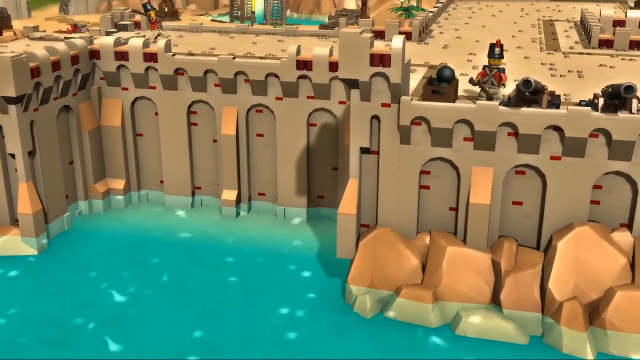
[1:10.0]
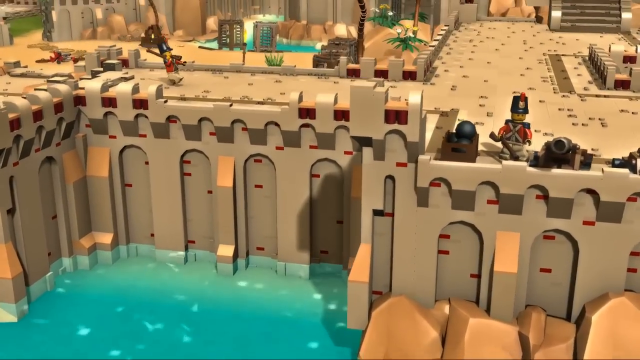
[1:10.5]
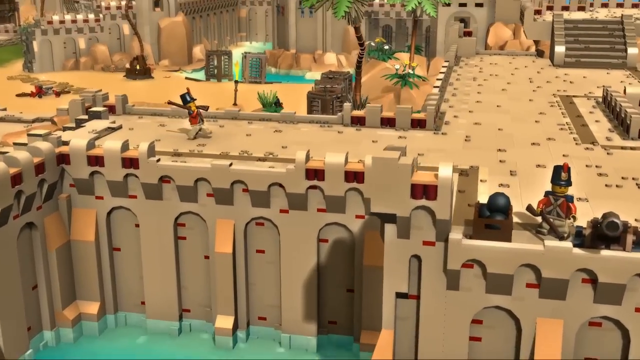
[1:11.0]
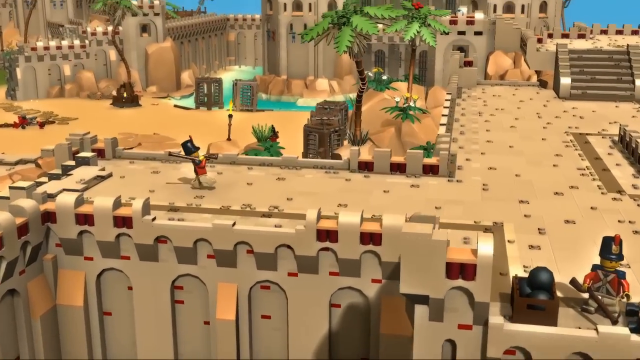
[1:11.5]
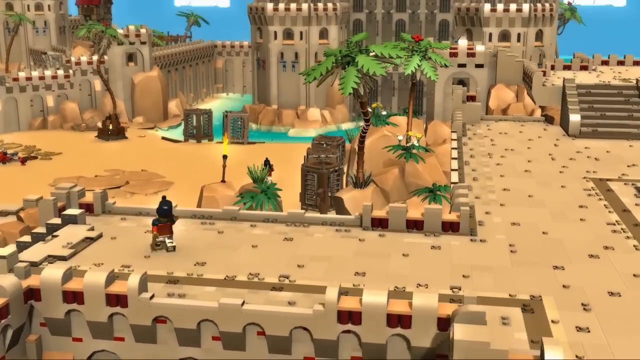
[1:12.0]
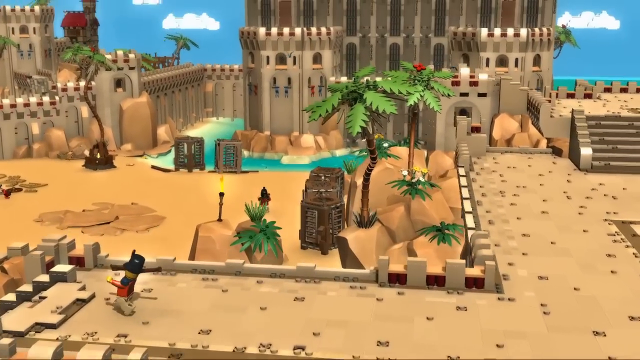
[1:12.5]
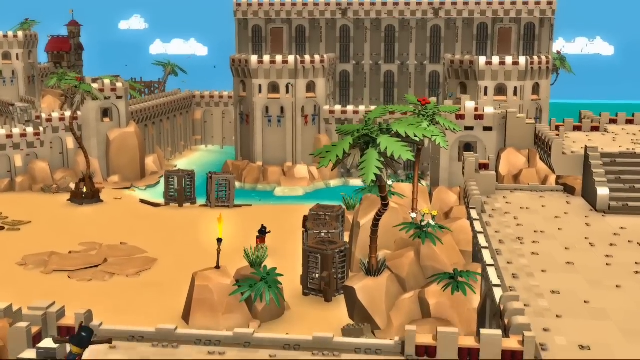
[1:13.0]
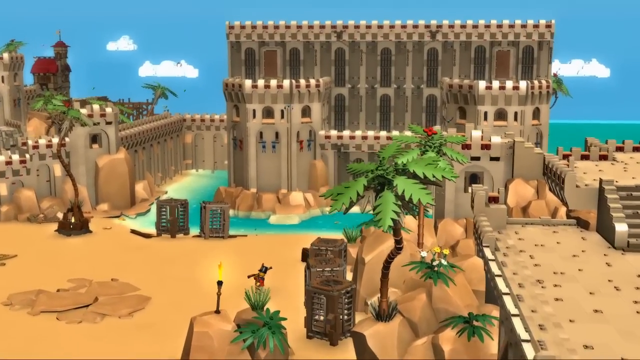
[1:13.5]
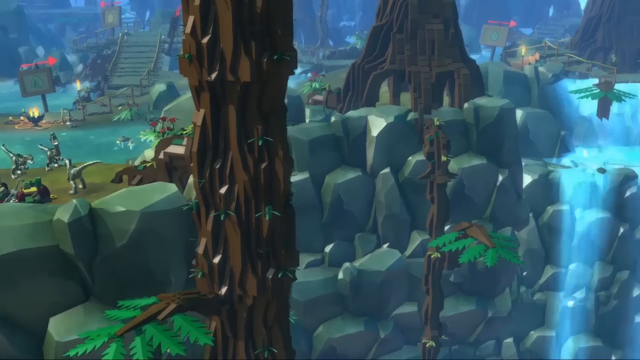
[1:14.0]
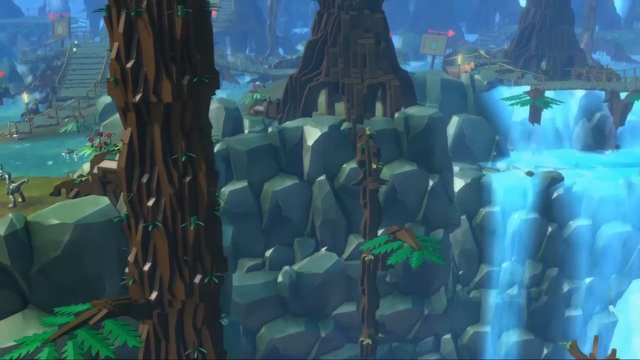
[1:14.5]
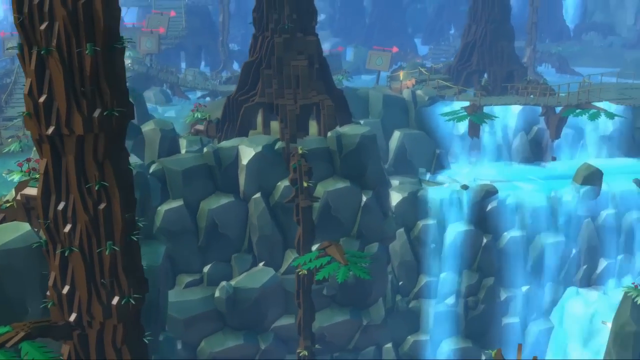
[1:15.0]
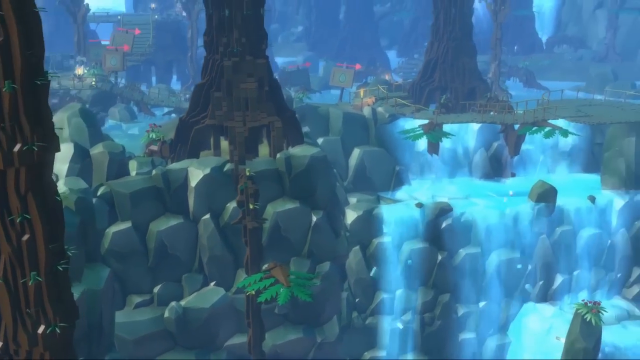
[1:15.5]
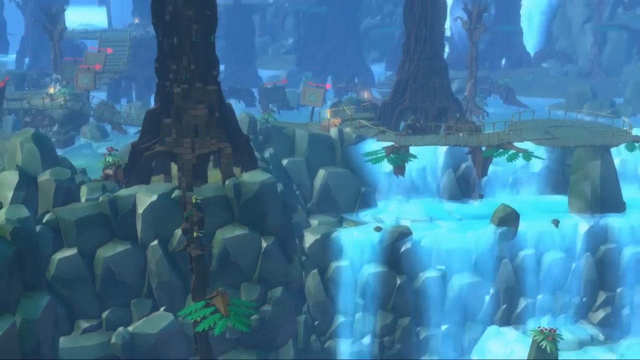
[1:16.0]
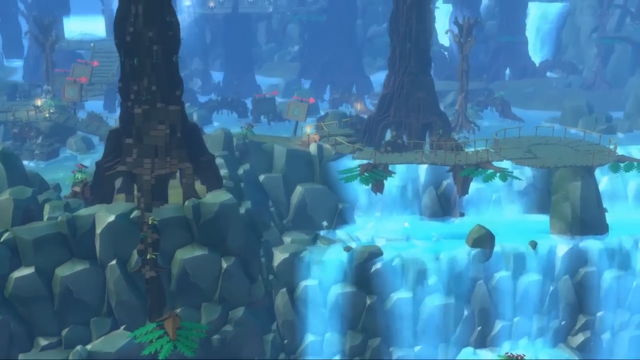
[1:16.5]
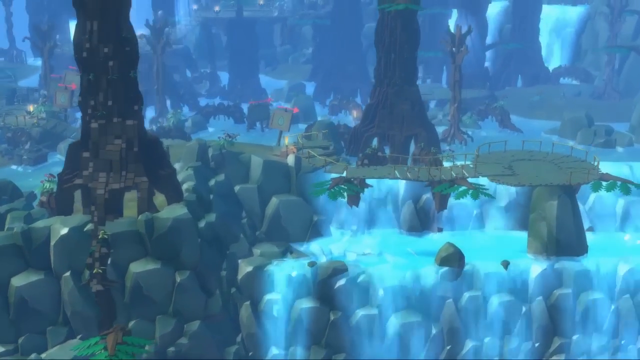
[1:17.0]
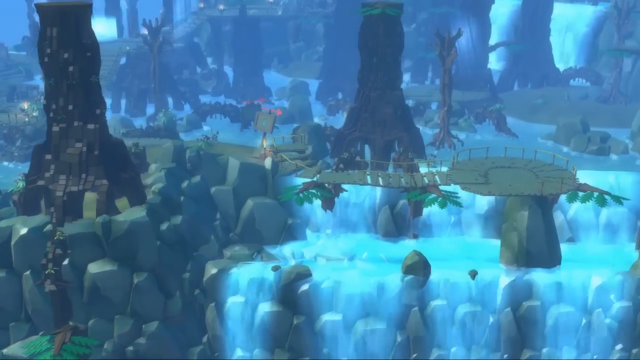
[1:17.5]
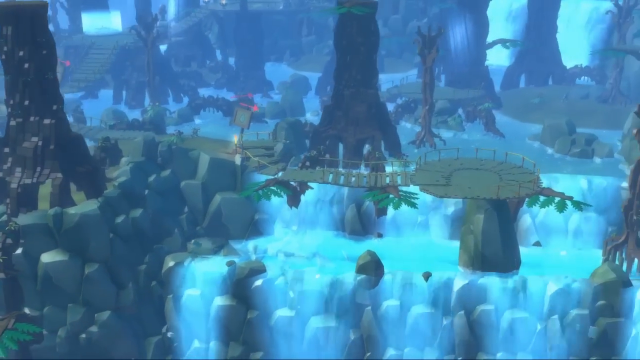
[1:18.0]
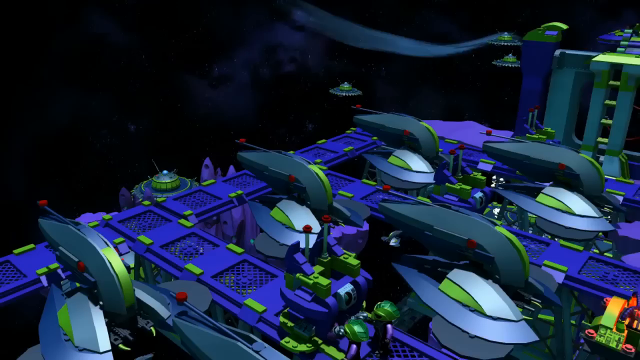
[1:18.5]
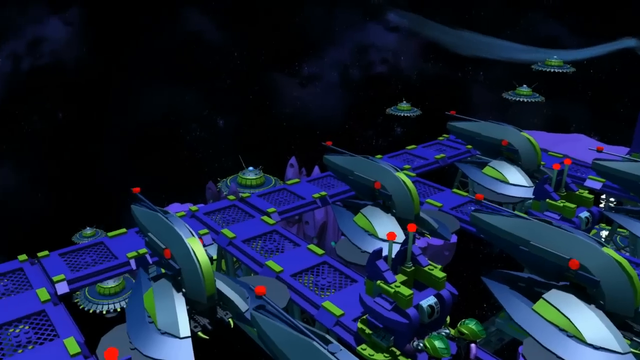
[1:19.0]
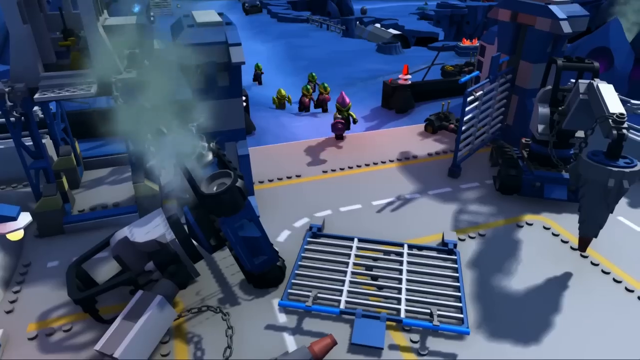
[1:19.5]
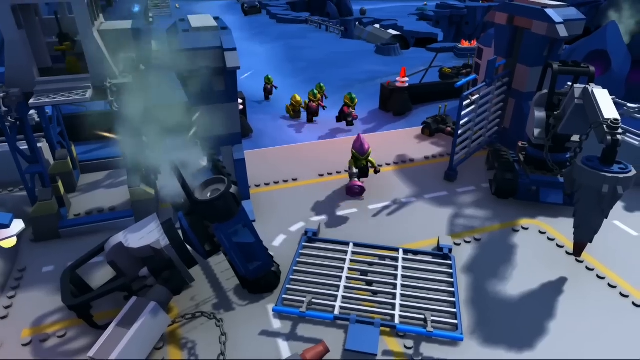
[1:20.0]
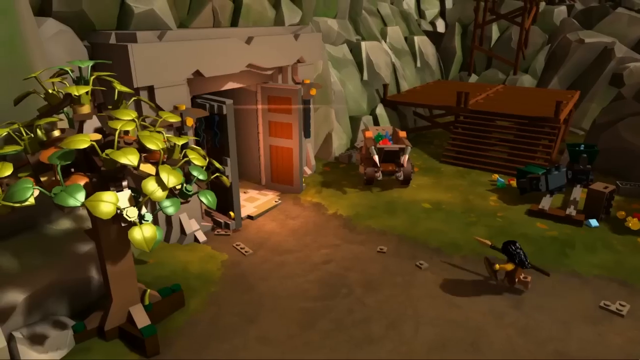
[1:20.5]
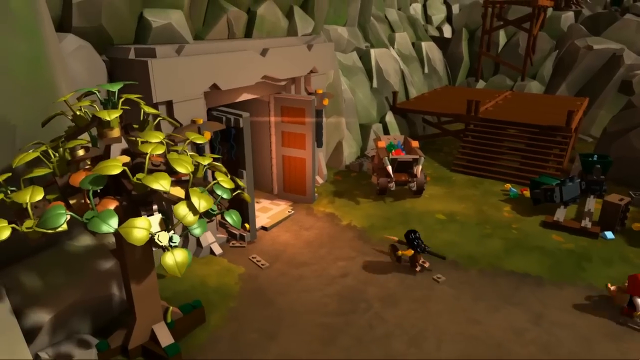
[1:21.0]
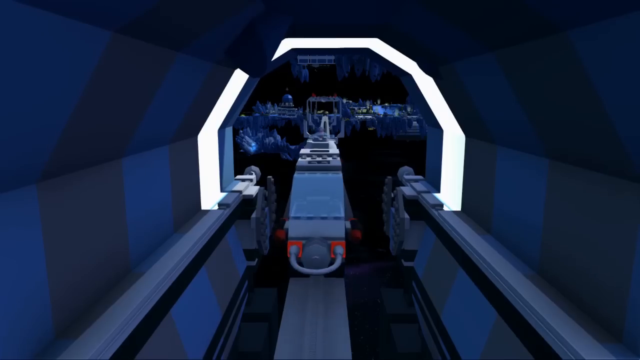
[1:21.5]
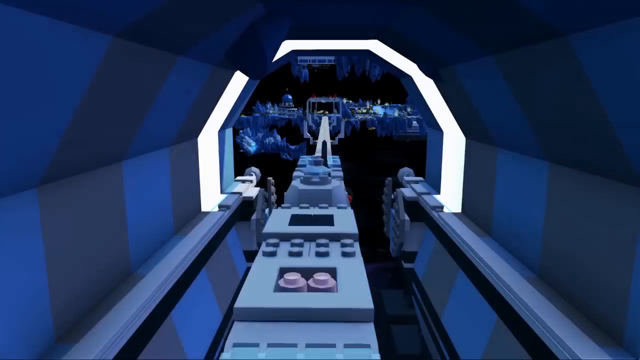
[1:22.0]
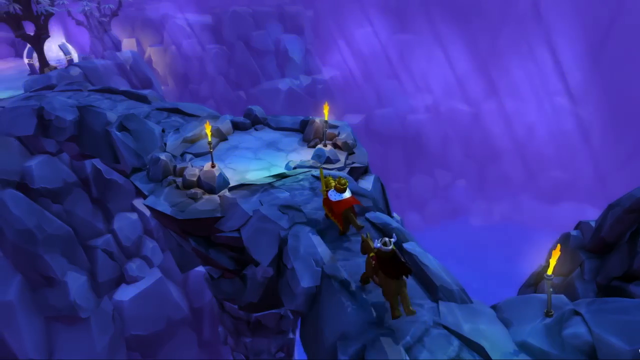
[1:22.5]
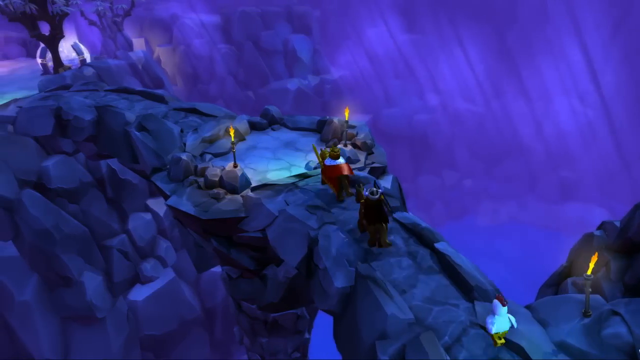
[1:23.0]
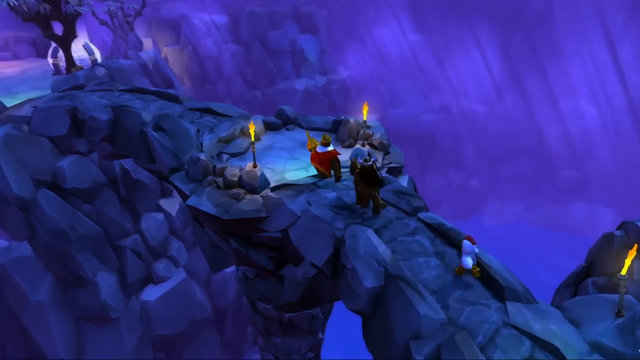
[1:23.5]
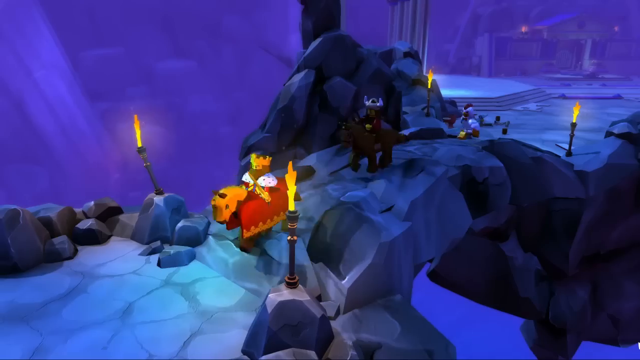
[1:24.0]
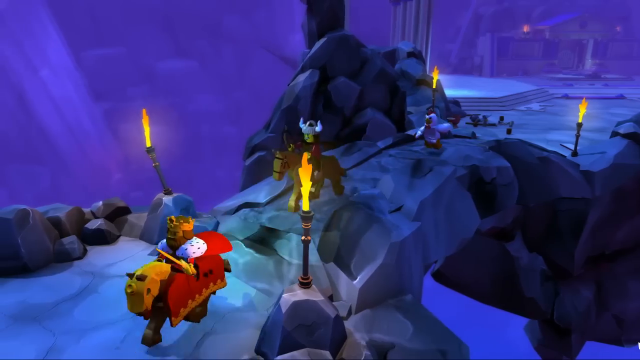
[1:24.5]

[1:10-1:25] The shot continues, panning up a tan building amid a large ocean. Two characters who sort of look like British security guards wander the grounds, and there is a tan castle. Different settings follow with waterfalls, enormous trees, bridges and rocks, the water glistening blue and no people, seemingly showing off the settings of each place. Then comes a space setting, followed by a gray, factory-like setting with lots of people running. An outdoor shot follows, then a moving train, then a blue and purple rocky area with three LEGO people running across a bridge: one wears a chicken costume, one seems to be a knight riding a horse, and the other is more of a viking riding a horse. Four torches of fire light up the bridge, in what is like some sort of cave.